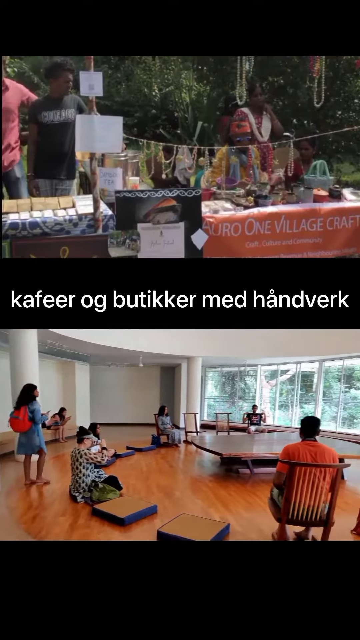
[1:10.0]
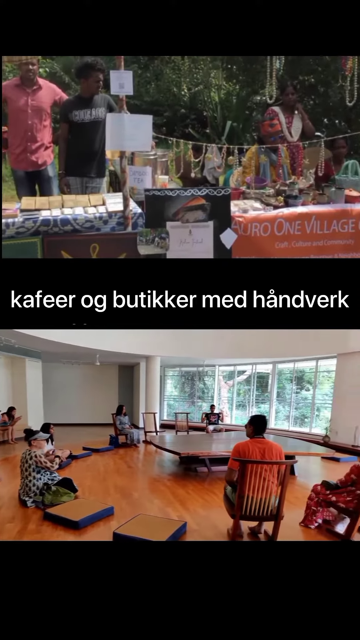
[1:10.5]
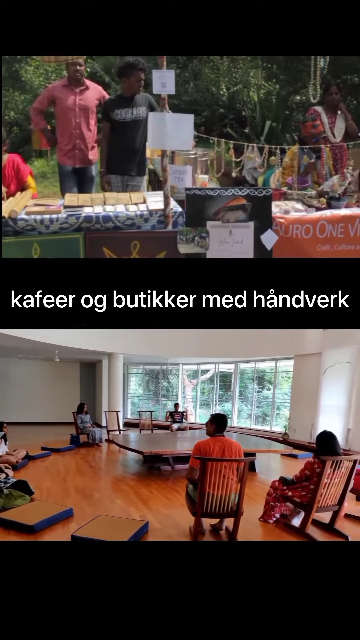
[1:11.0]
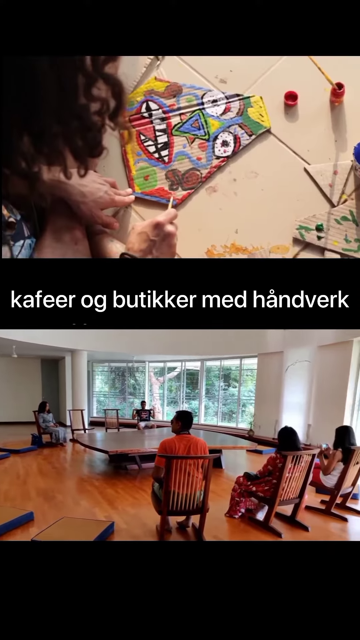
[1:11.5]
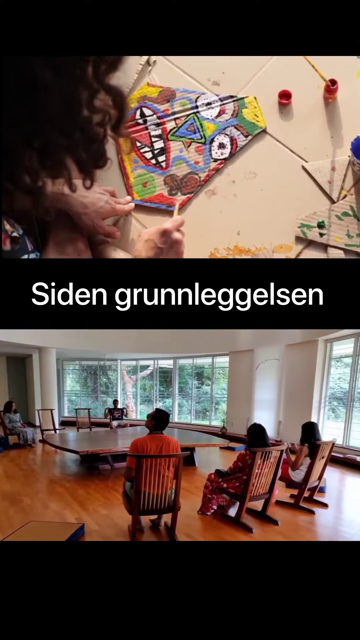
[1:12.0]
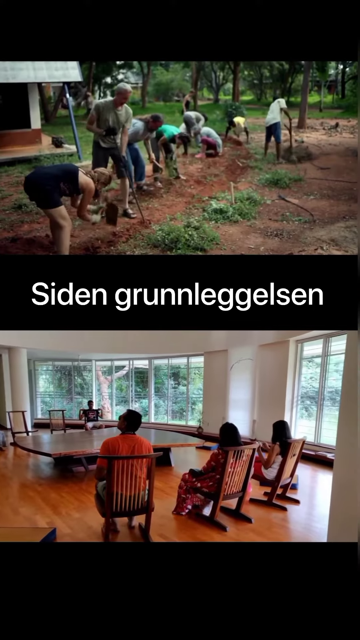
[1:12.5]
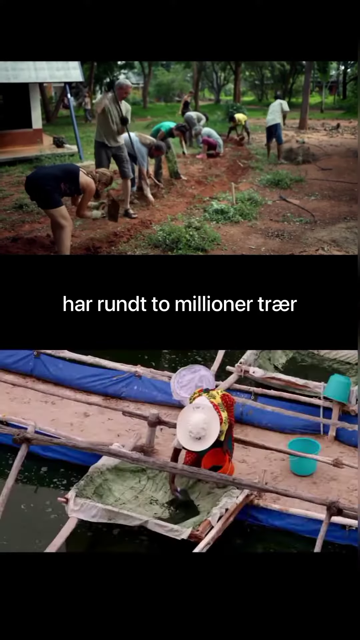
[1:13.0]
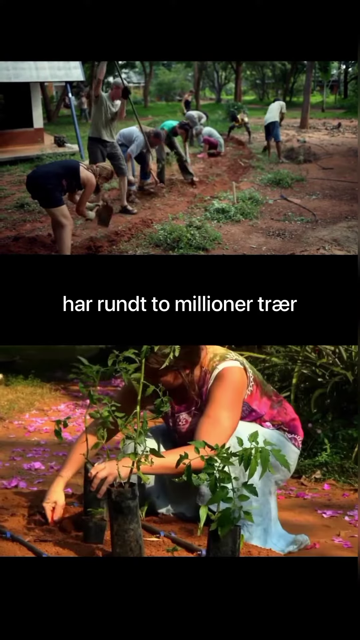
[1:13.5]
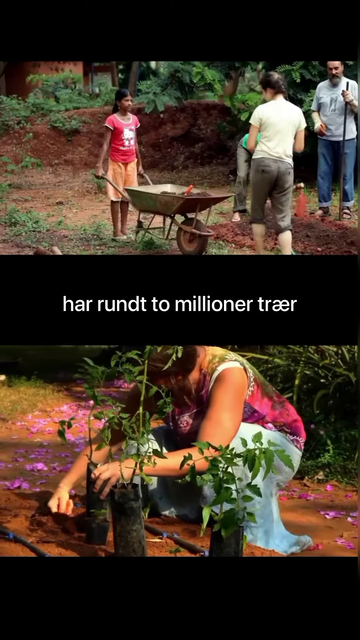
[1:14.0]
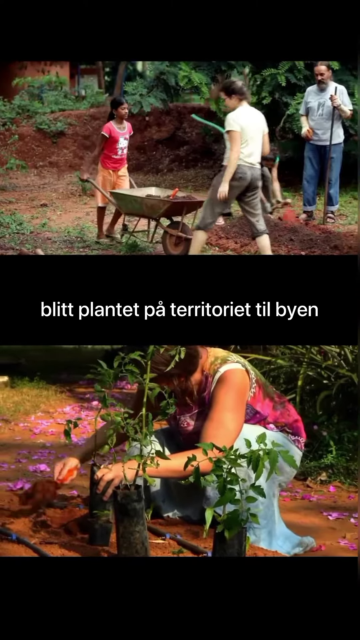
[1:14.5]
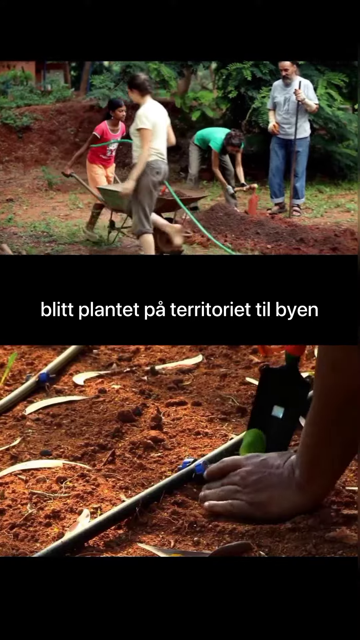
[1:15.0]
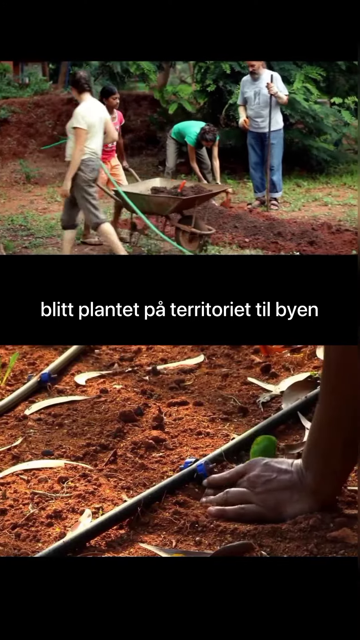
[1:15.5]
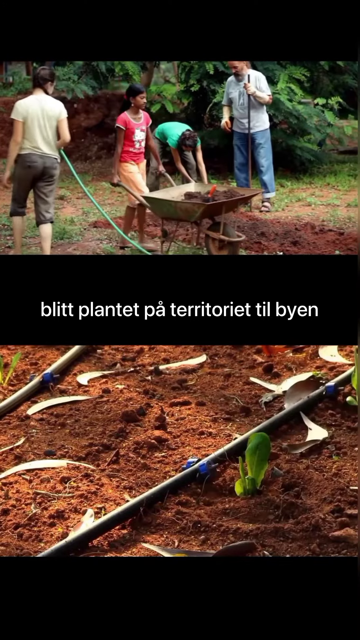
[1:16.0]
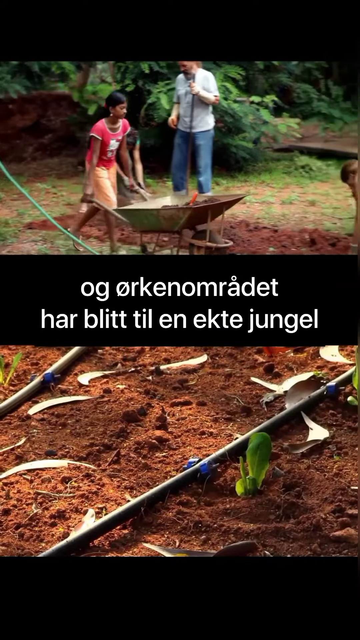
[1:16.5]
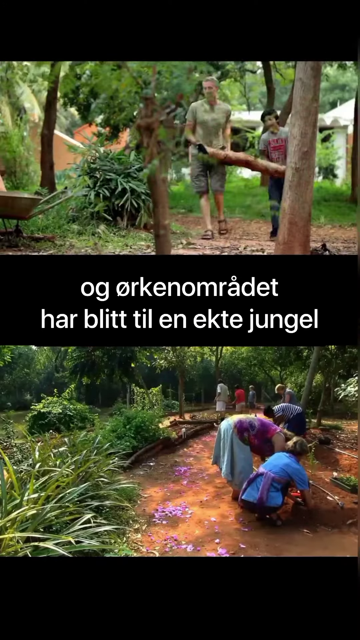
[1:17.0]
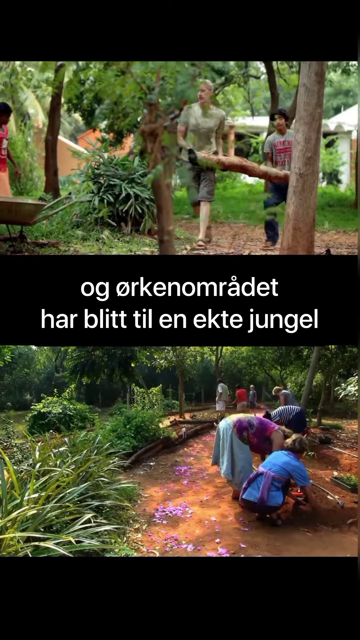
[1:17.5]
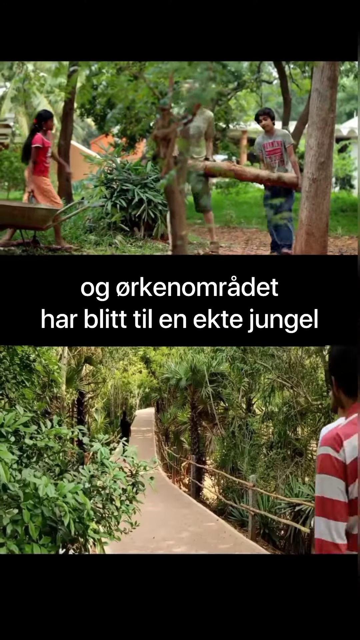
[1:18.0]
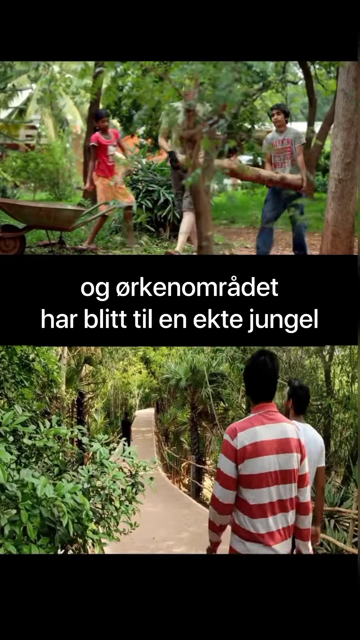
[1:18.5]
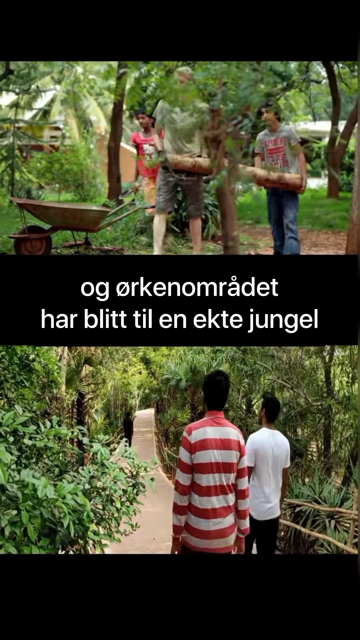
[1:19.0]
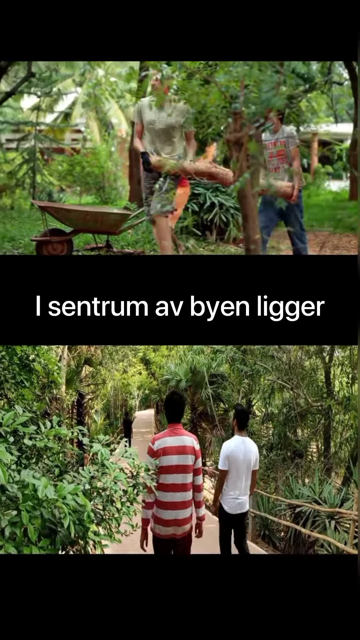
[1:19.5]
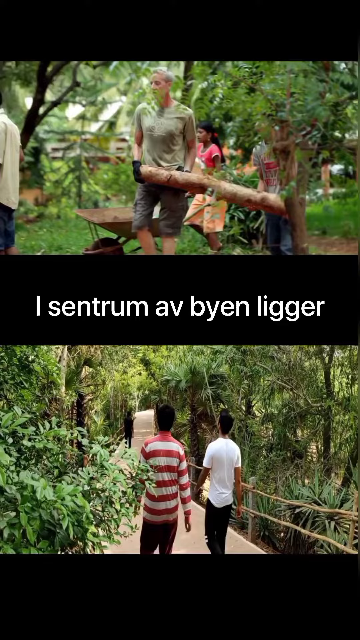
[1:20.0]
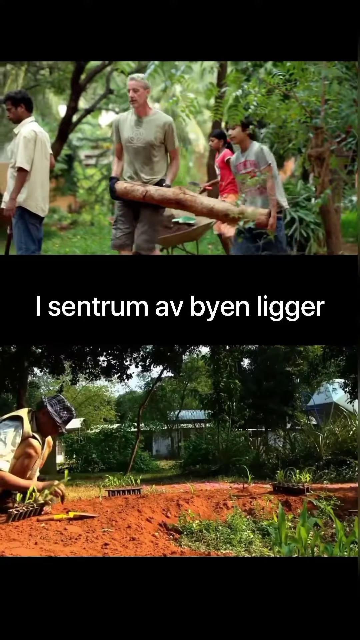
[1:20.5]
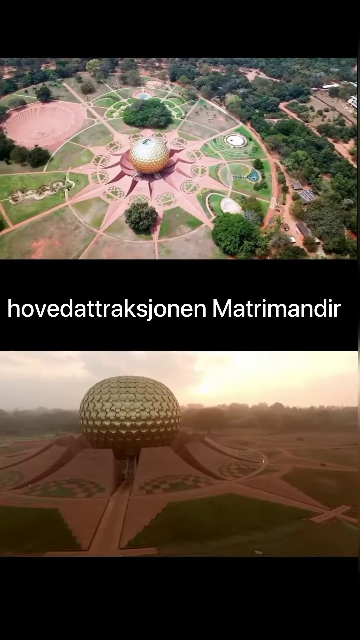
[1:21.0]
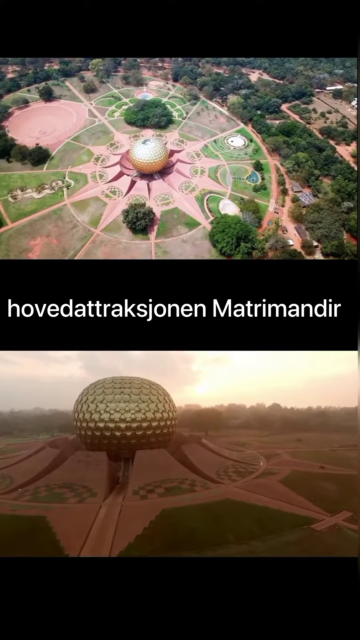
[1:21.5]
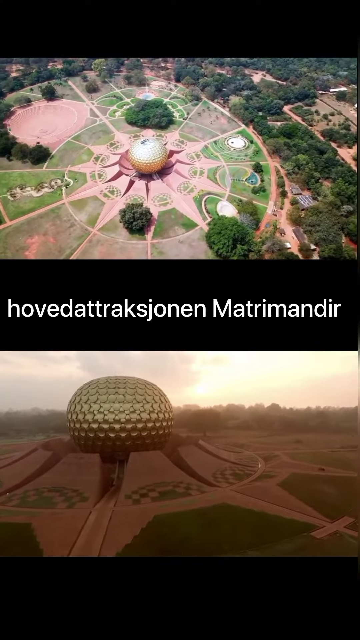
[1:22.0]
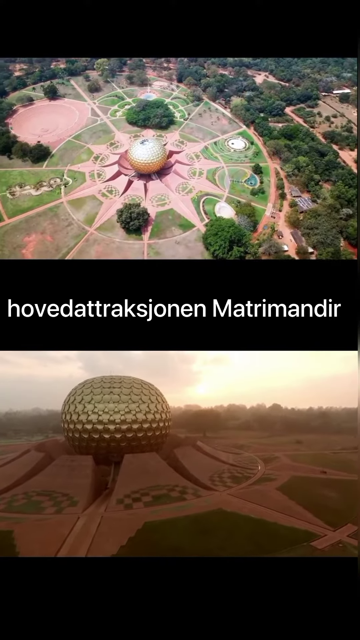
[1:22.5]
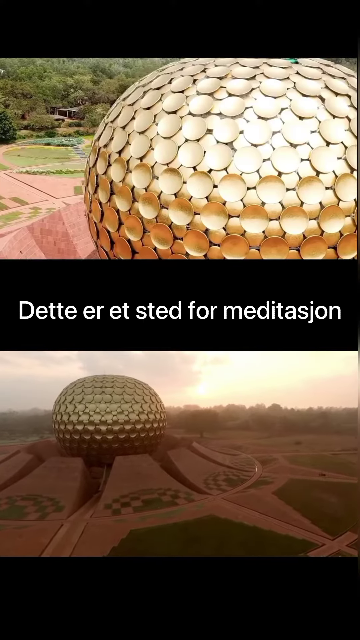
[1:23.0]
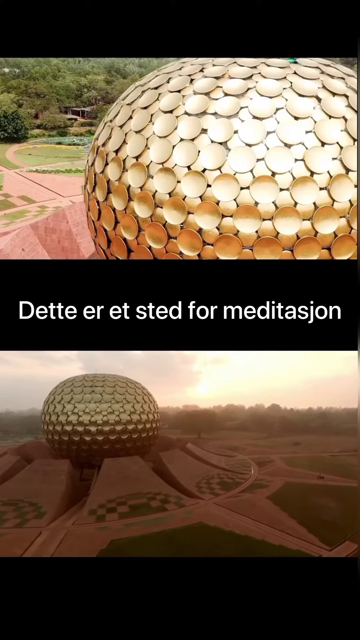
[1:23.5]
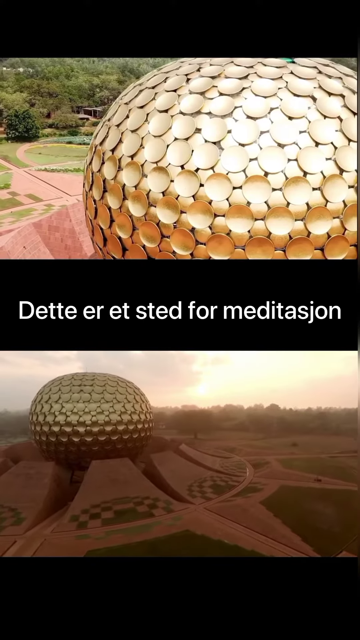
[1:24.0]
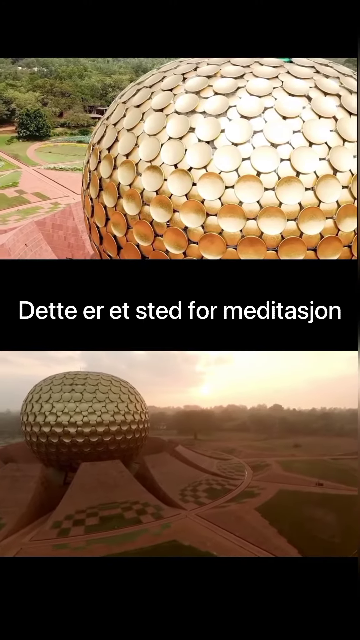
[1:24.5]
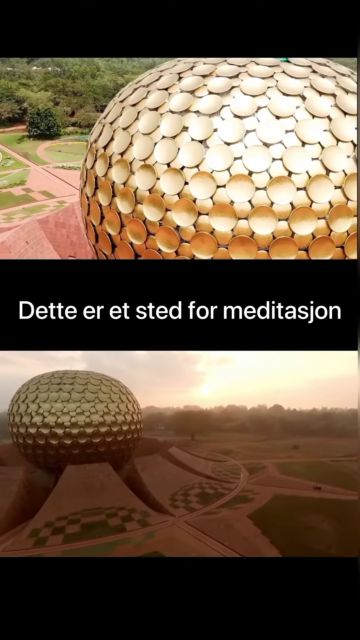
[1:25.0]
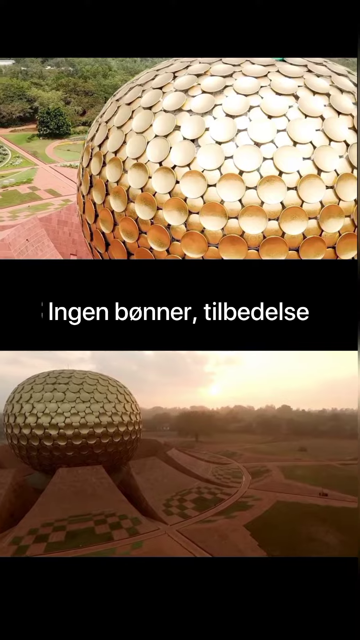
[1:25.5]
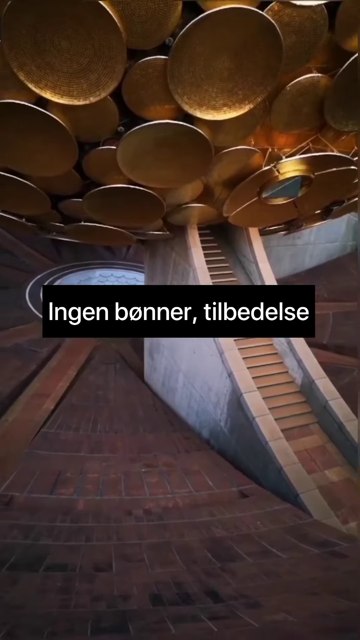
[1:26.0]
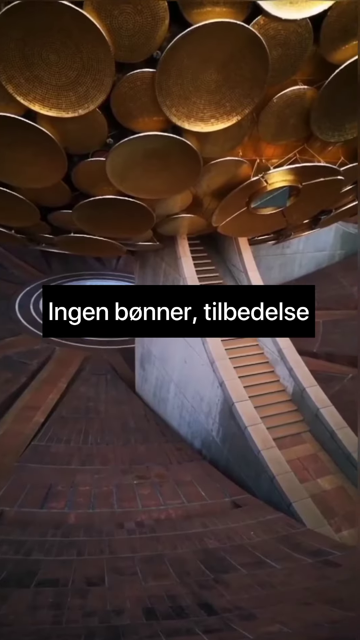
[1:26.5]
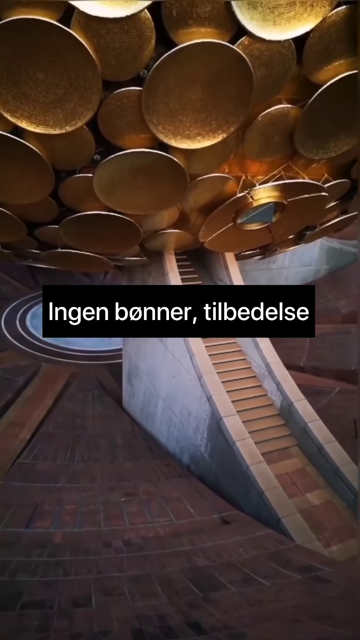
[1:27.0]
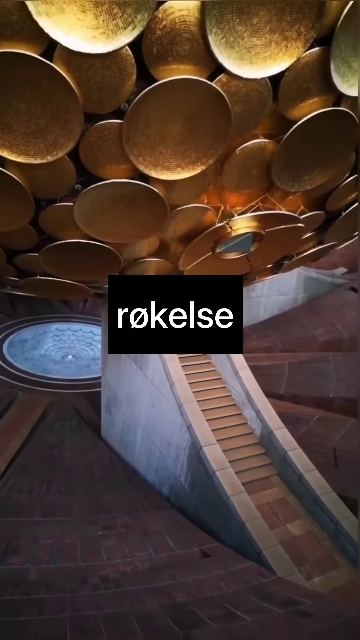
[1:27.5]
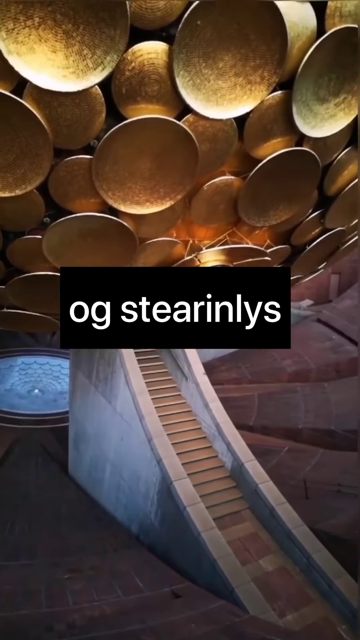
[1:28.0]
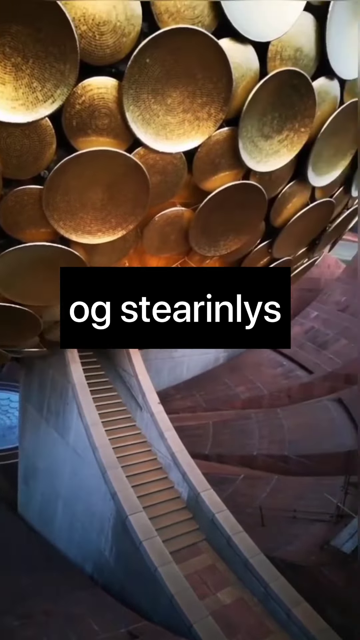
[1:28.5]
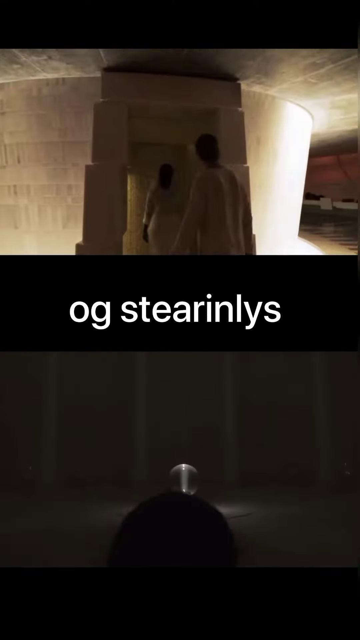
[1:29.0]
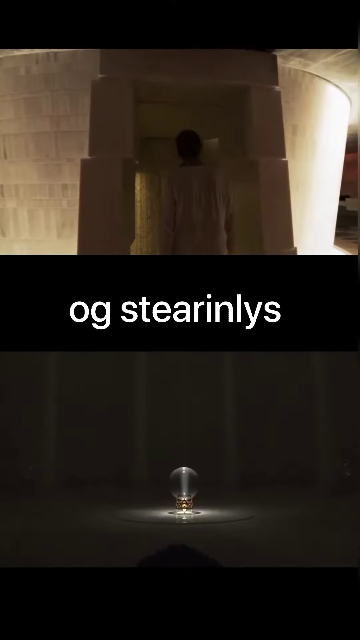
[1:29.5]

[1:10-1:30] More activities in the place are shown; it seems to be a community or village being built around Auroville. The video keeps returning to a large gold structure. It shows what may be a classroom environment, people doing arts and crafts, and people building gardens and flowerbeds, seemingly working together as a community. One sign apparently reads "village" followed by "crafts", with the first word unclear. A stall sells crafts of beads, jewelry and necklaces.